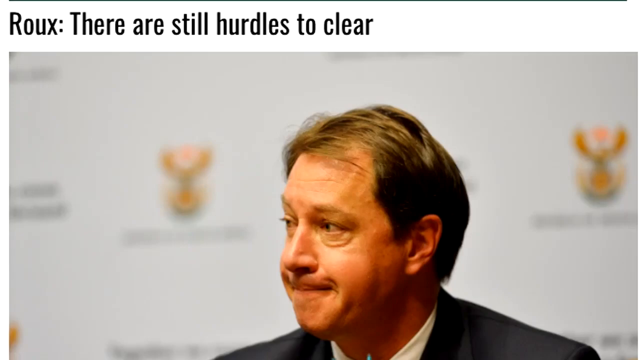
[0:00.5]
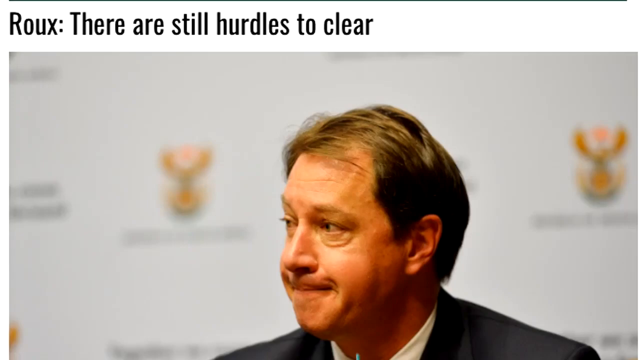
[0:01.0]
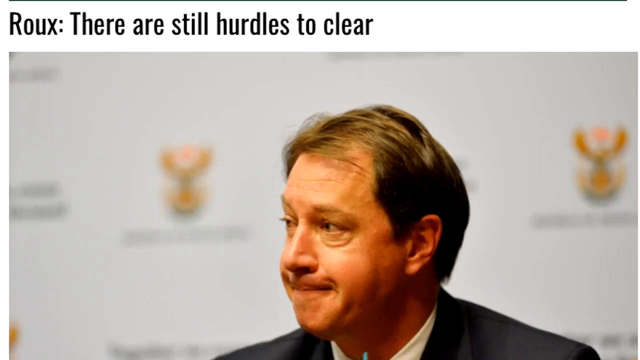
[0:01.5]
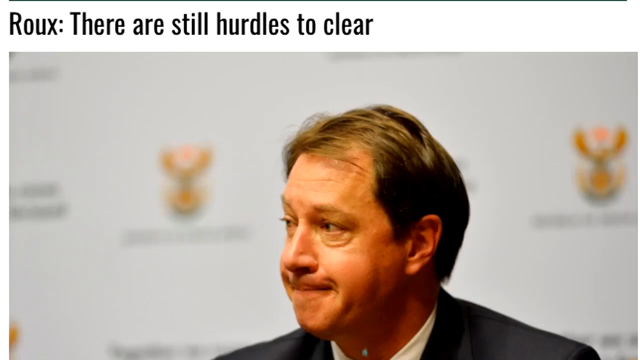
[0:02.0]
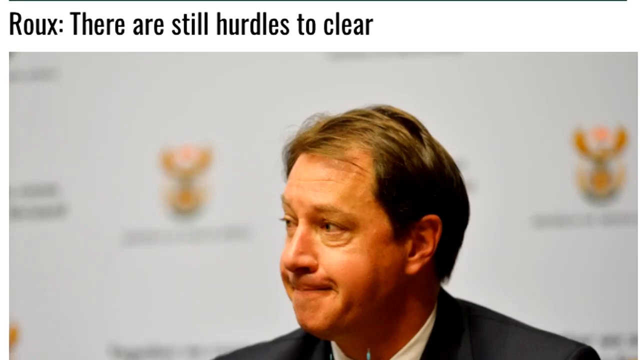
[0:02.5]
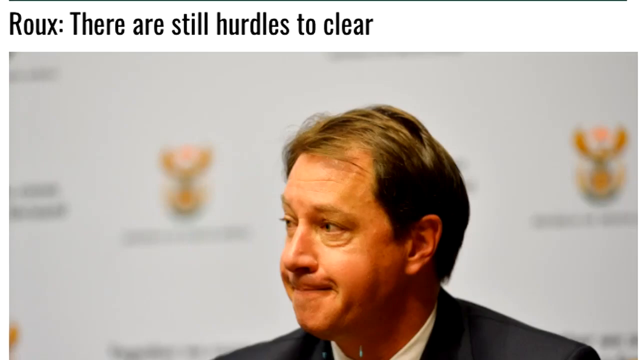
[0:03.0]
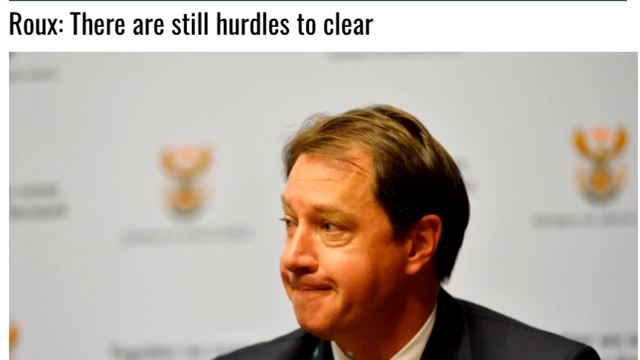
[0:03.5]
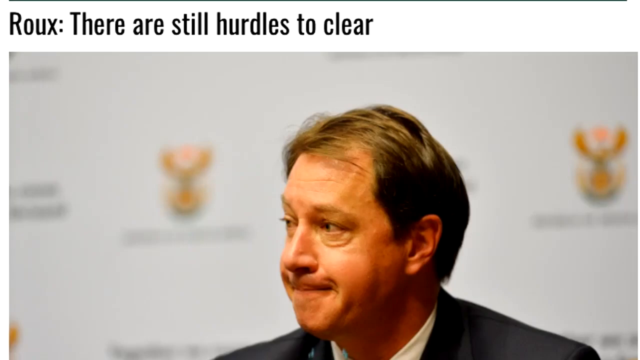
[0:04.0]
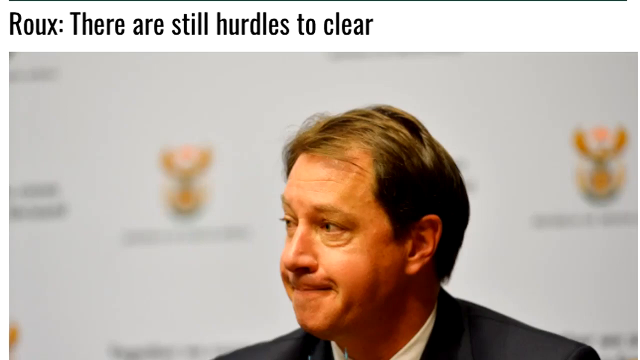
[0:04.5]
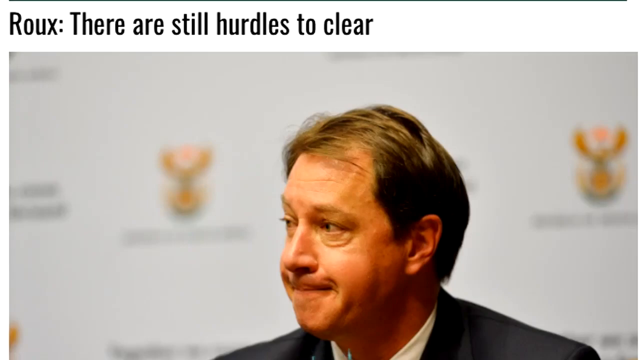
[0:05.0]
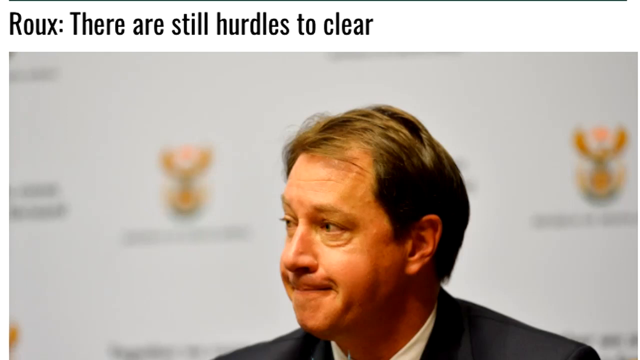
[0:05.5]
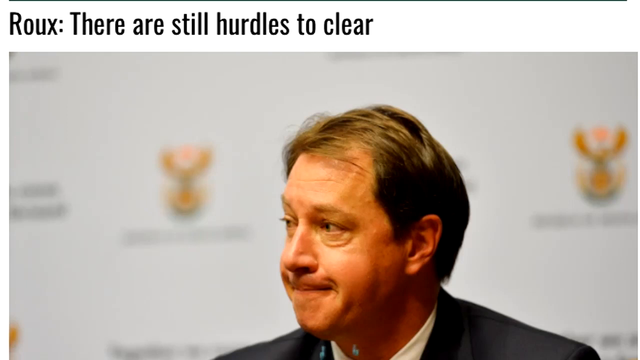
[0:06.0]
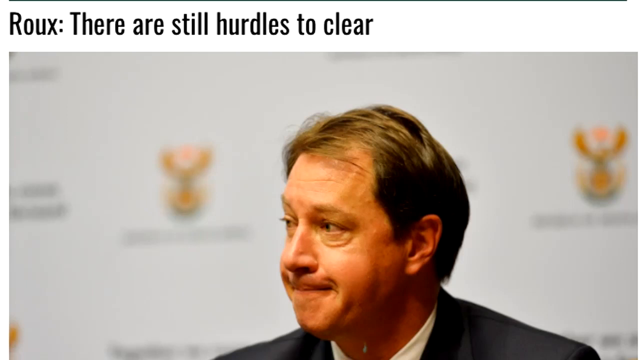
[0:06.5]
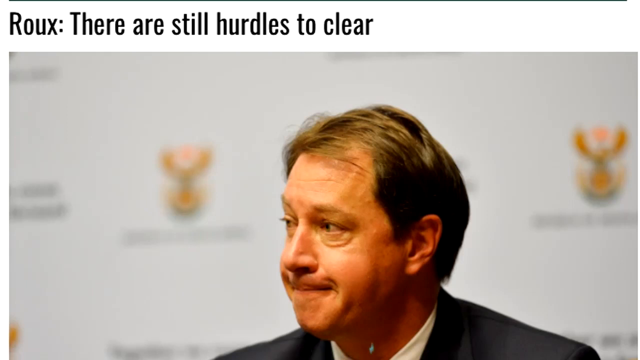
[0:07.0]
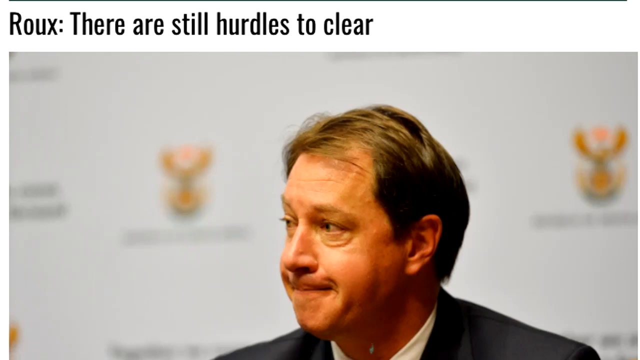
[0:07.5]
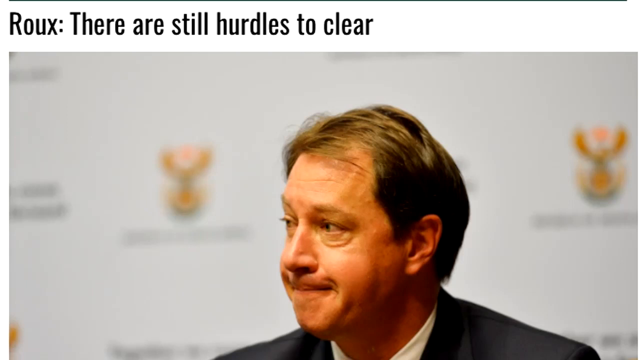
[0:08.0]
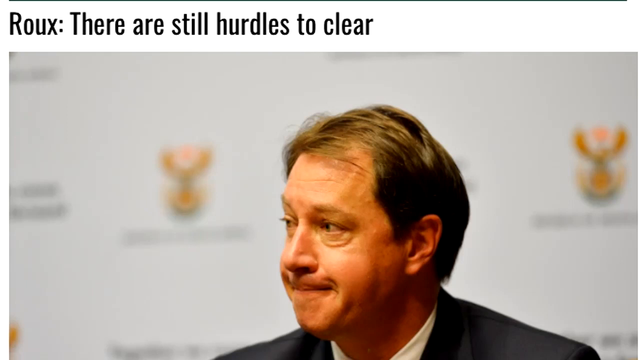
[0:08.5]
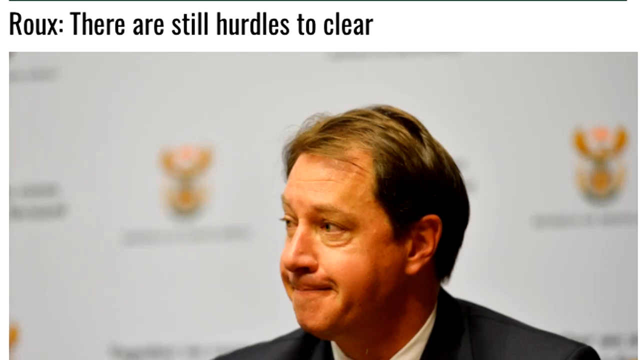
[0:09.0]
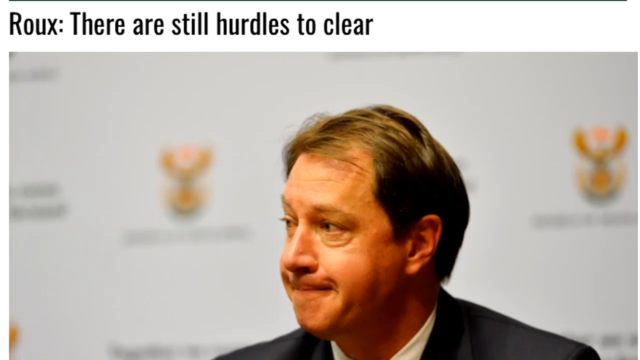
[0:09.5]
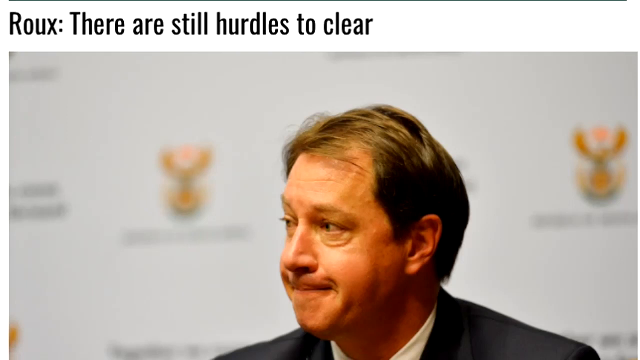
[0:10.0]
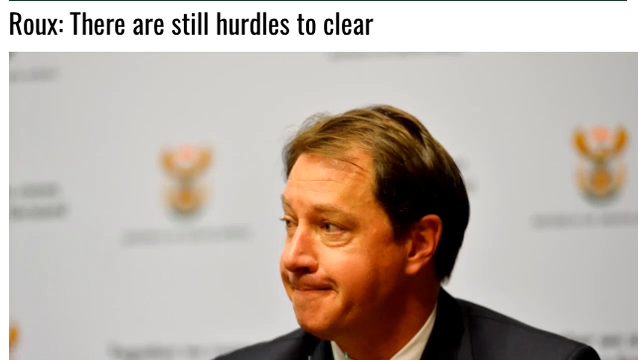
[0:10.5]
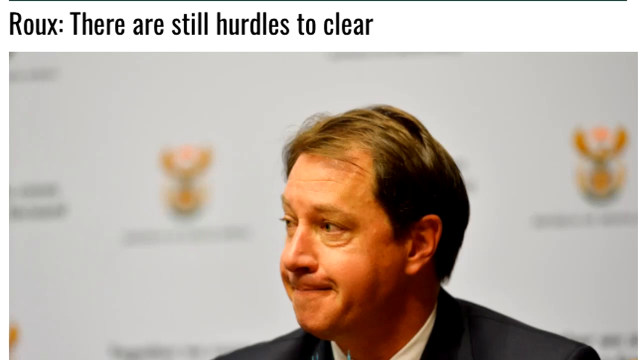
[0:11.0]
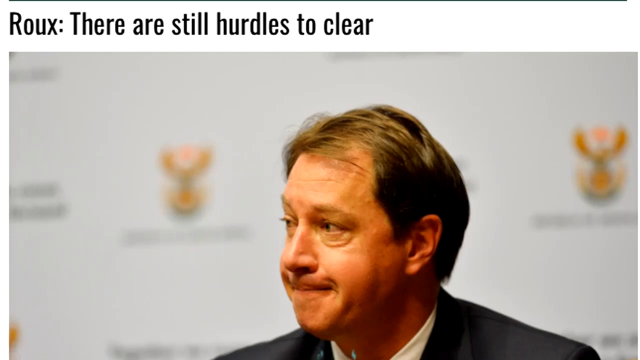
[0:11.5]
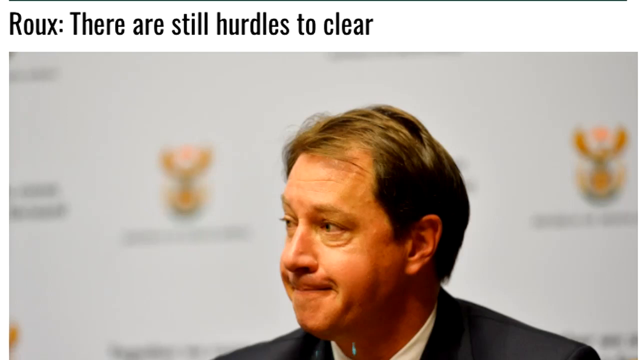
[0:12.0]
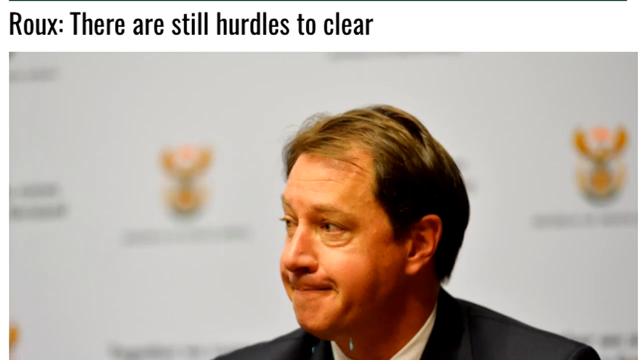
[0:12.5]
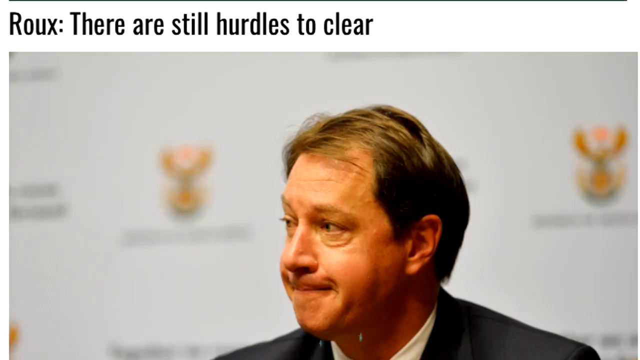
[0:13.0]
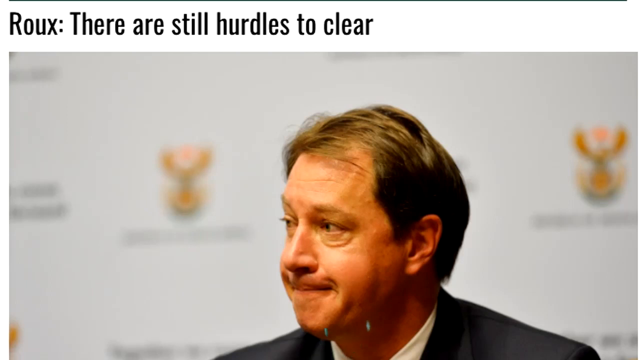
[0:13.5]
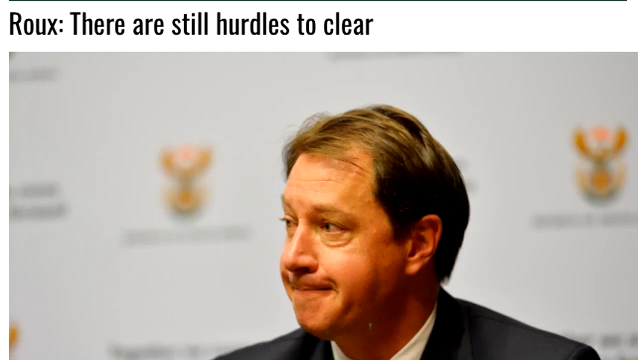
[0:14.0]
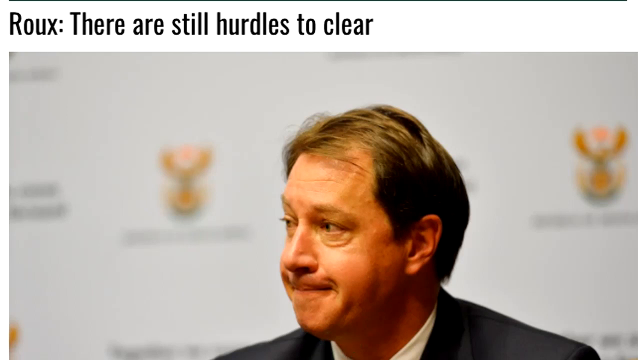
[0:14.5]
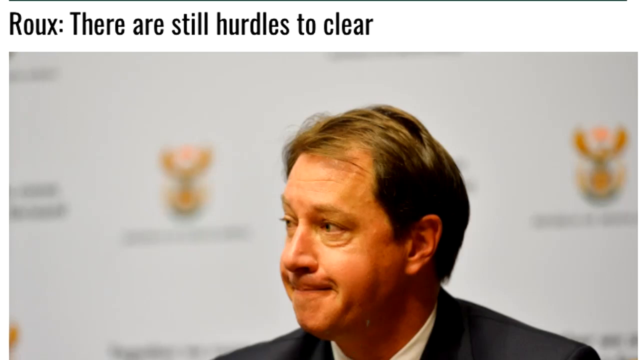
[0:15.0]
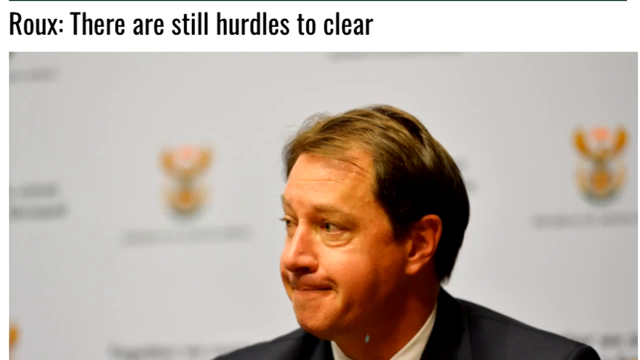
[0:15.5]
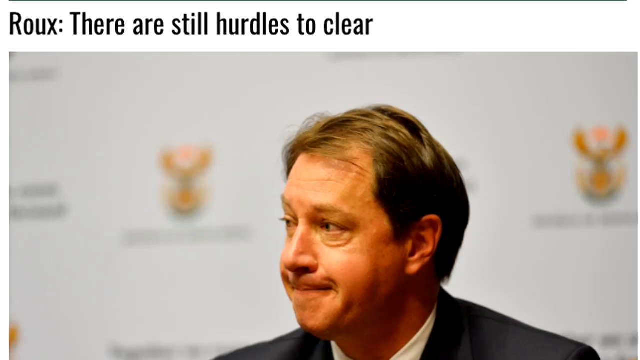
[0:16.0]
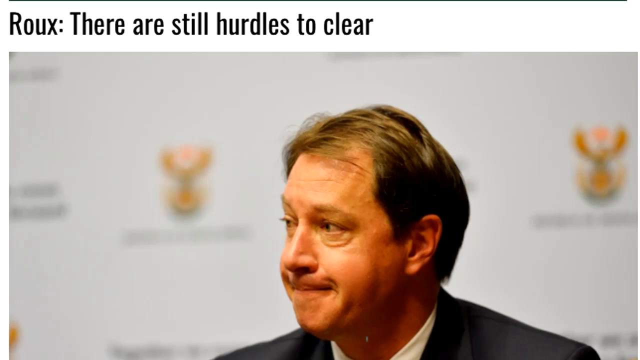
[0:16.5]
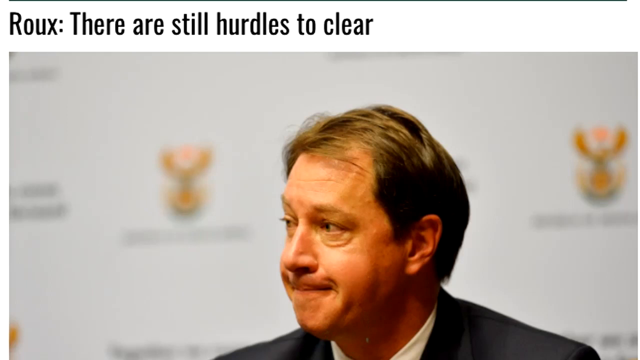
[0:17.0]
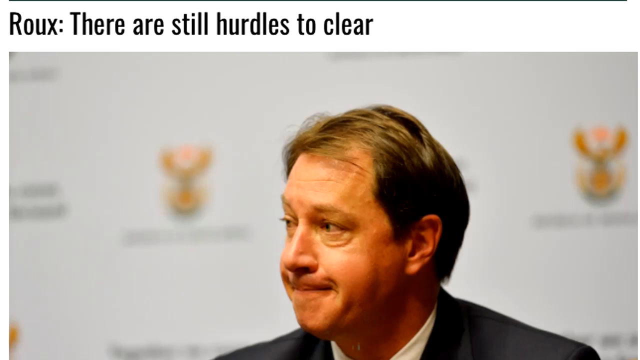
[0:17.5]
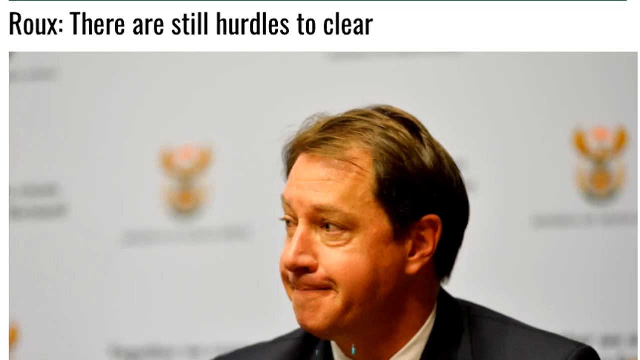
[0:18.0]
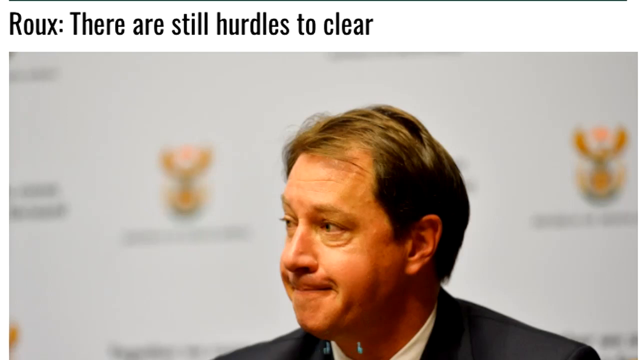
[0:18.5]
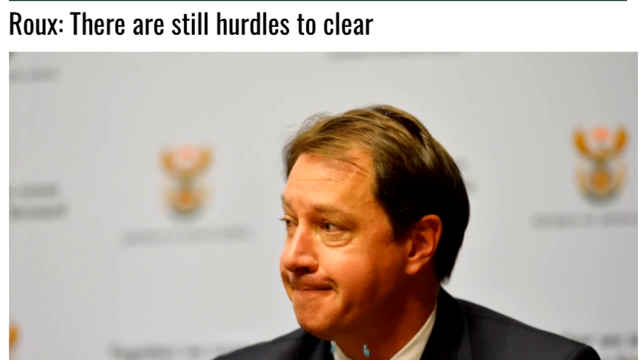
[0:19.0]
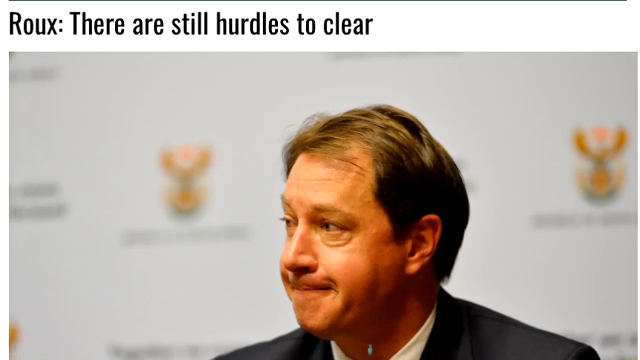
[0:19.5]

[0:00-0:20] The video opens on a white man, probably around 53 or 54 years old, with brown hair of about medium length. He is staring with a sort of pensive look and seems a little frustrated, his lips pursed tight against his gums. He stares off to his right, camera left. The background appears hazy and out of focus: a white backdrop with multiple different logos, including a gold logo that almost looks like an eagle with its wings up. It is a static image with nothing going on. Just below the man's chin there is some sort of reflection, an artifact from the video.